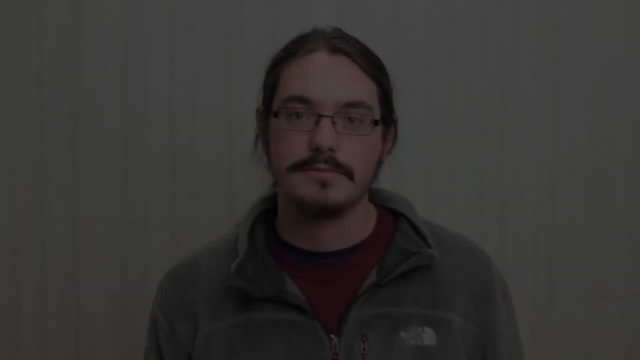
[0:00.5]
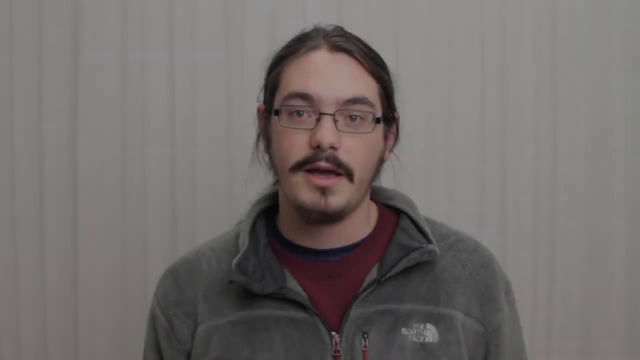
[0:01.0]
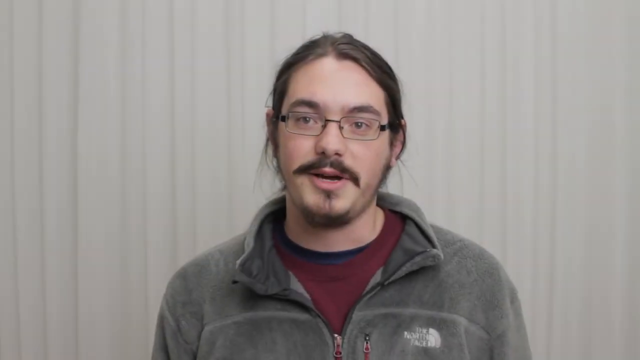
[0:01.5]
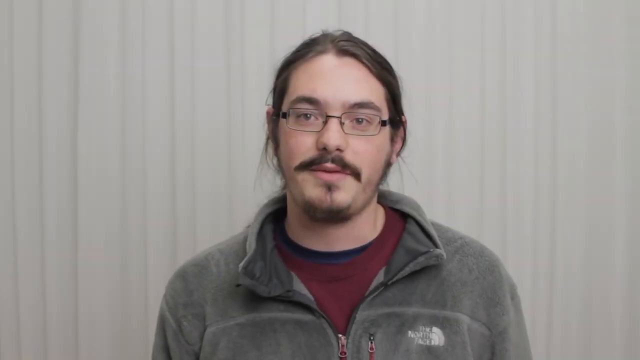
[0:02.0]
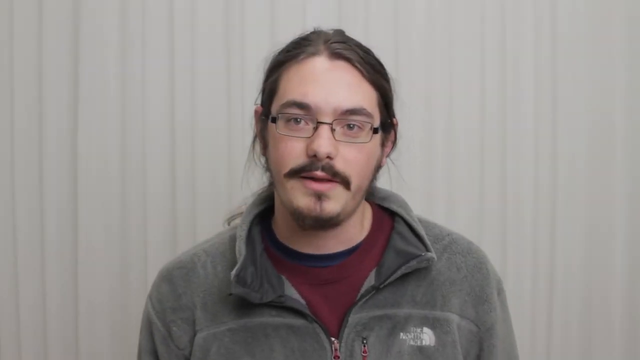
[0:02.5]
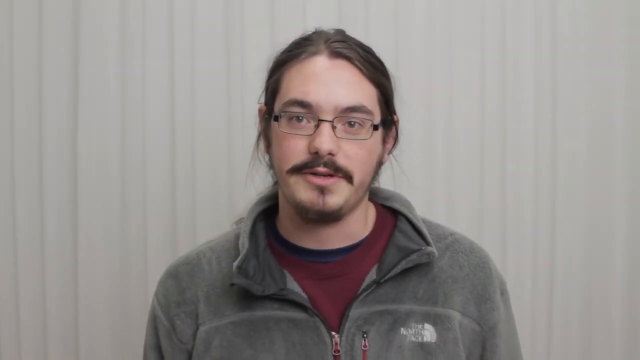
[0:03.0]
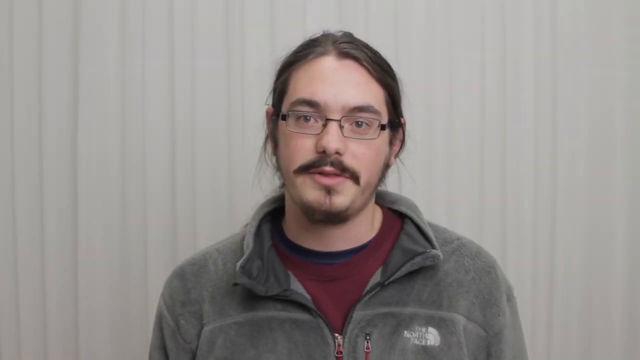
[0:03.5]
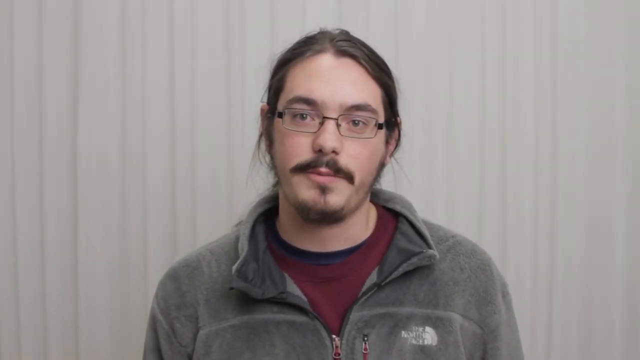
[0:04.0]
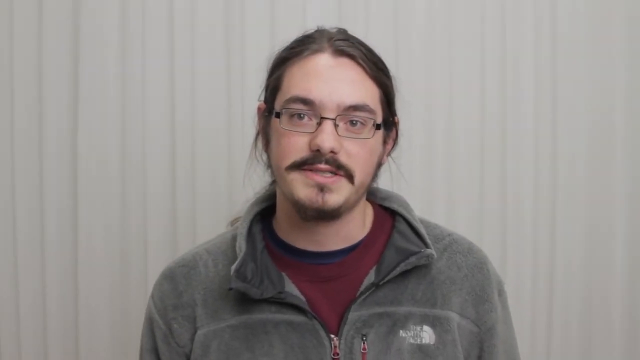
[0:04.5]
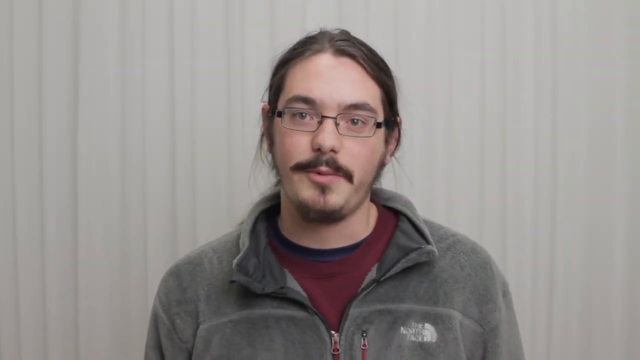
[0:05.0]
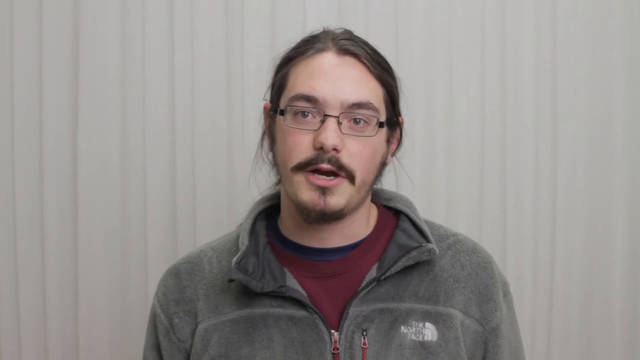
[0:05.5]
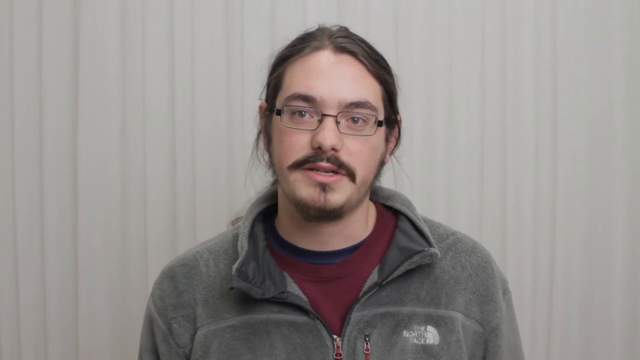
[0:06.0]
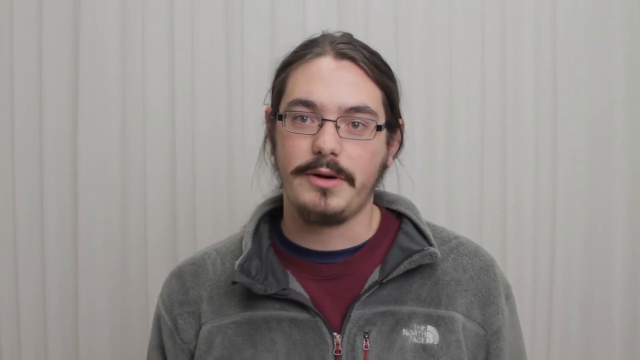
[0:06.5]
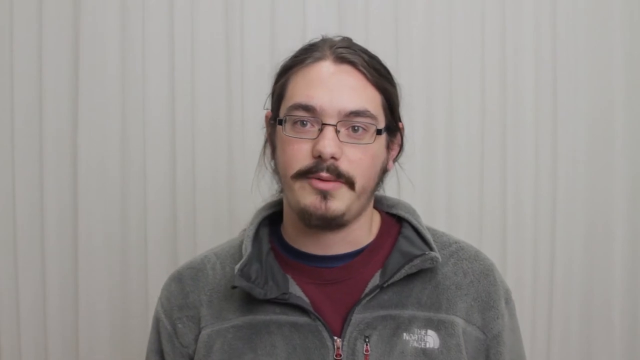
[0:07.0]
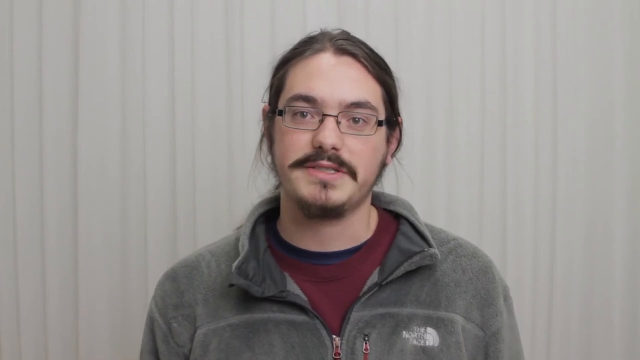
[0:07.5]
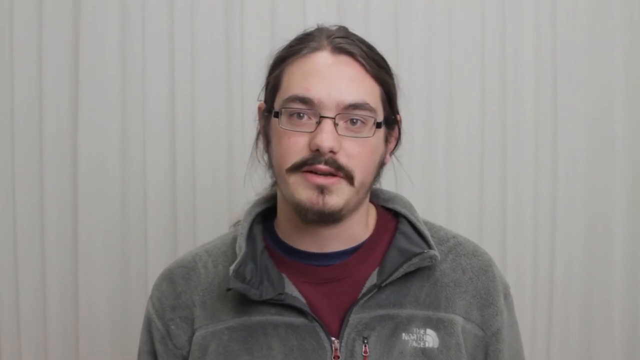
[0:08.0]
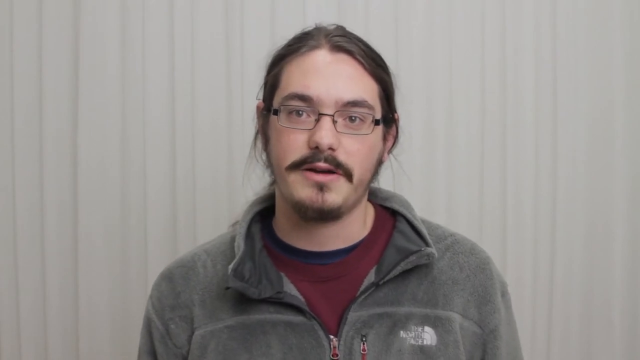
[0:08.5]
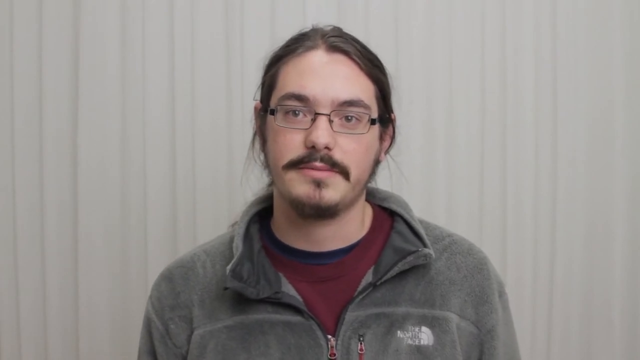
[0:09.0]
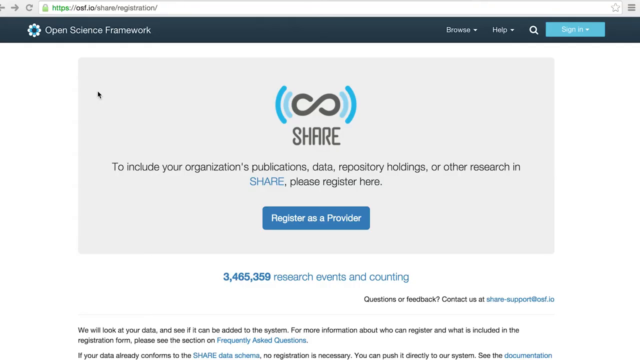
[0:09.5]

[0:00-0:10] A man with sunglasses, a mustache and long hair, wearing a gray sweater with a maroon sweater inside, faces the camera against a white background. He seems calm and seems to know what he is doing. The screen shows an open science framework called SHARE, with a sign-in and the text "To include the organization, publication data, repository, holdings, or other research in SHARE, please register here," along with an option to register as a provider. It also shows "3,465,359 research events and counting."